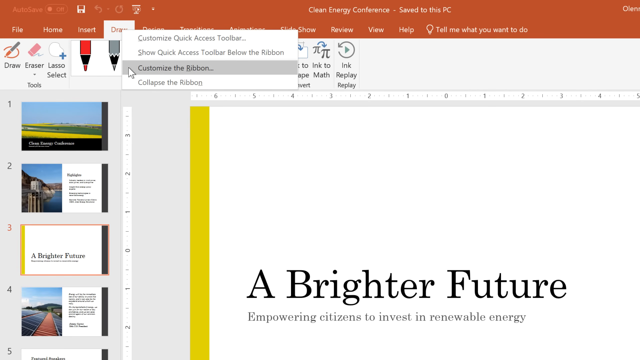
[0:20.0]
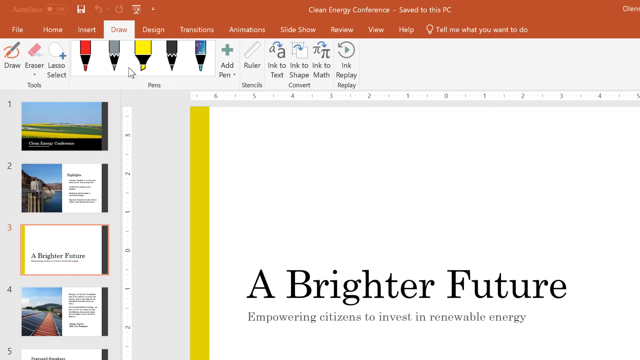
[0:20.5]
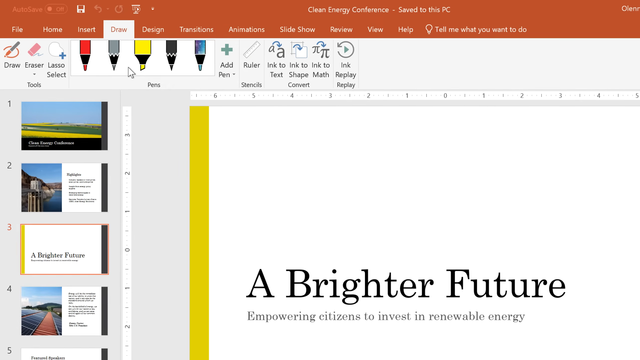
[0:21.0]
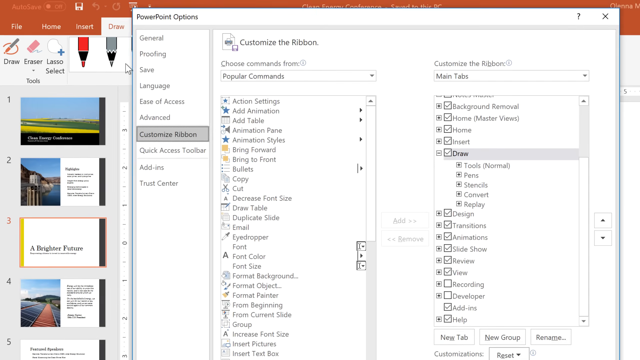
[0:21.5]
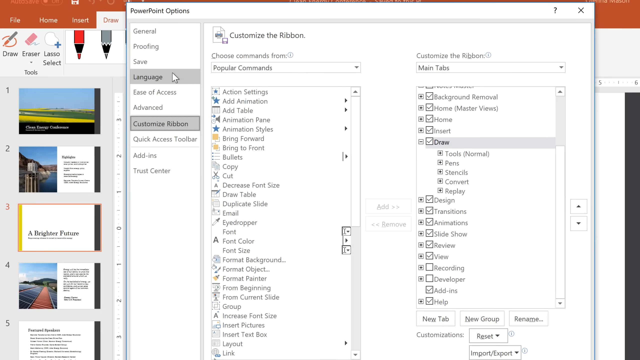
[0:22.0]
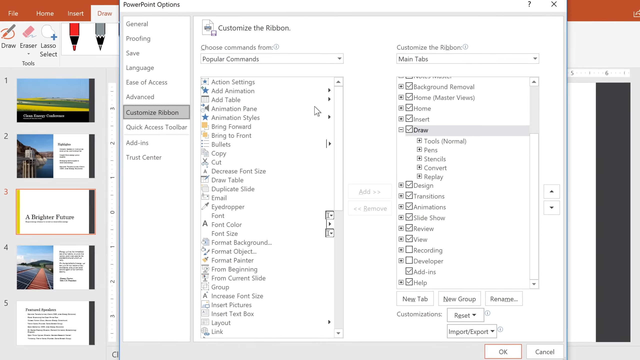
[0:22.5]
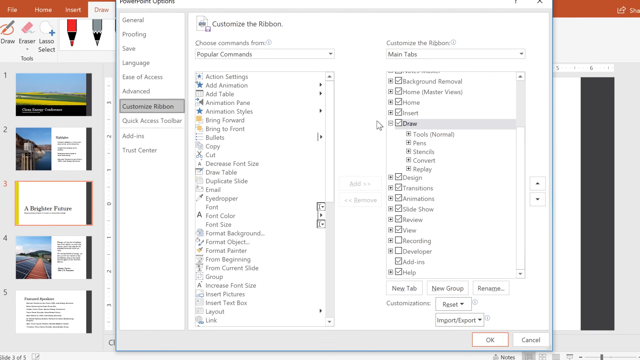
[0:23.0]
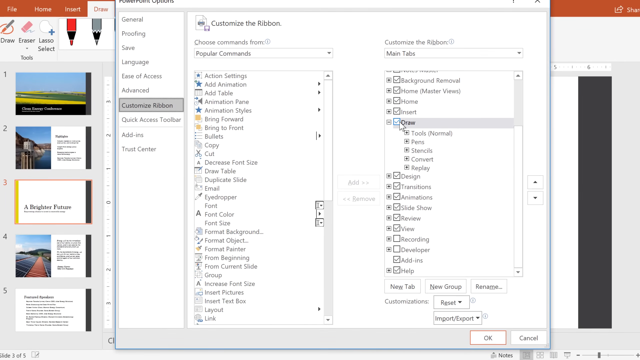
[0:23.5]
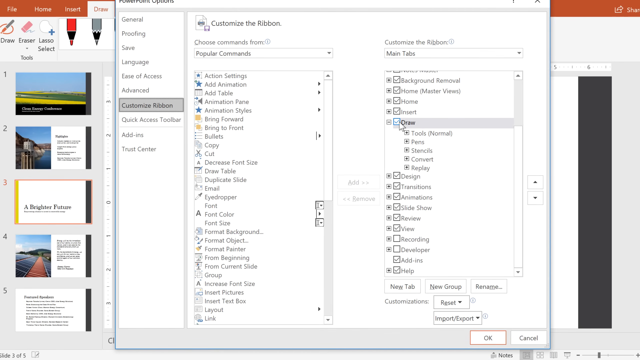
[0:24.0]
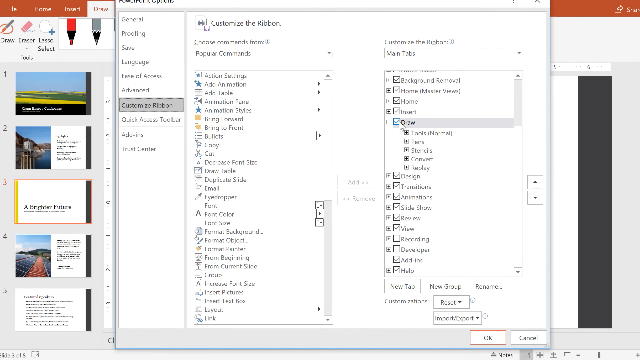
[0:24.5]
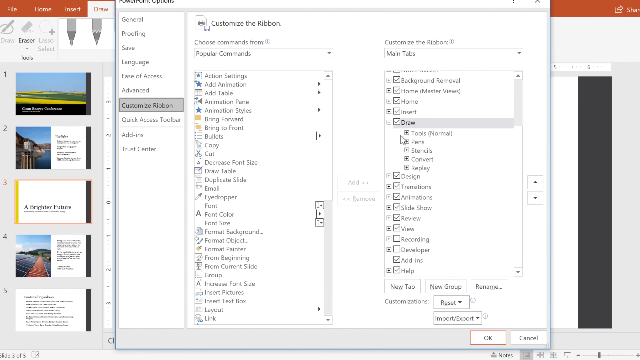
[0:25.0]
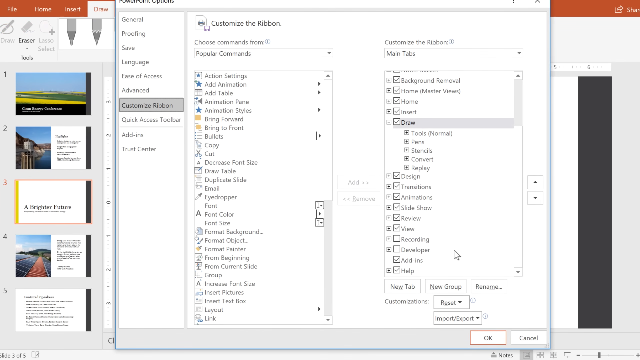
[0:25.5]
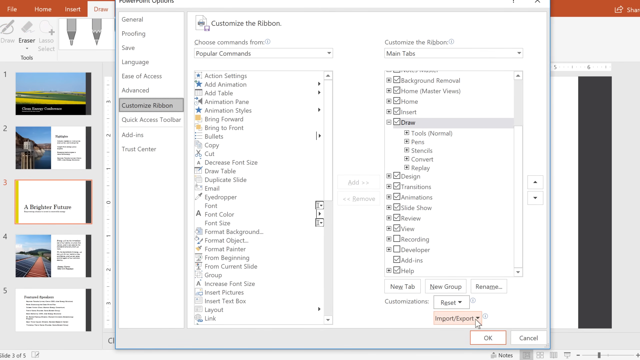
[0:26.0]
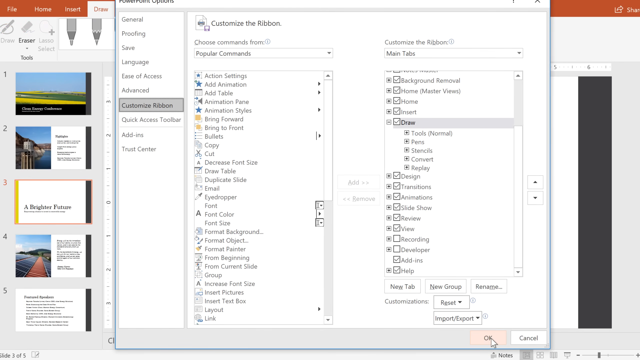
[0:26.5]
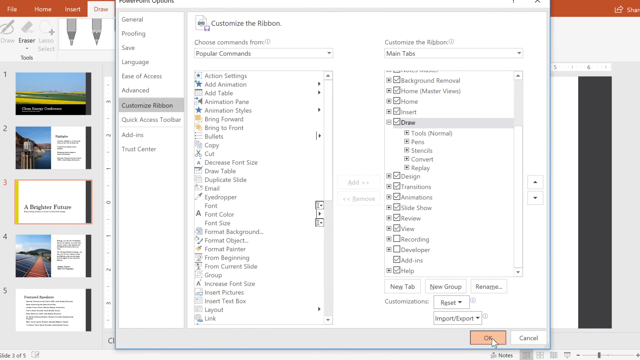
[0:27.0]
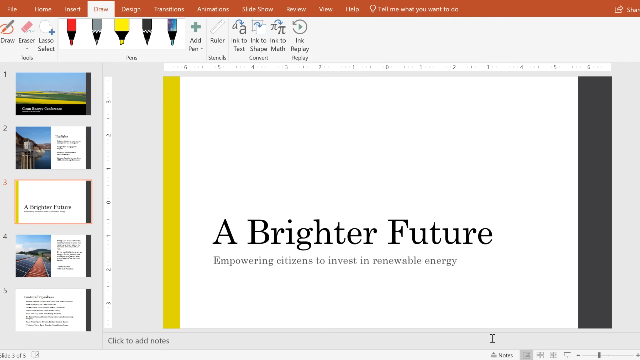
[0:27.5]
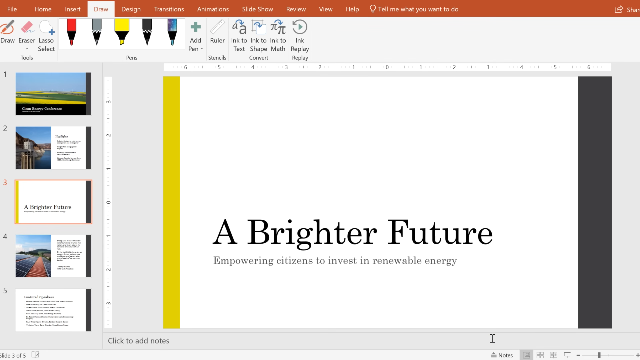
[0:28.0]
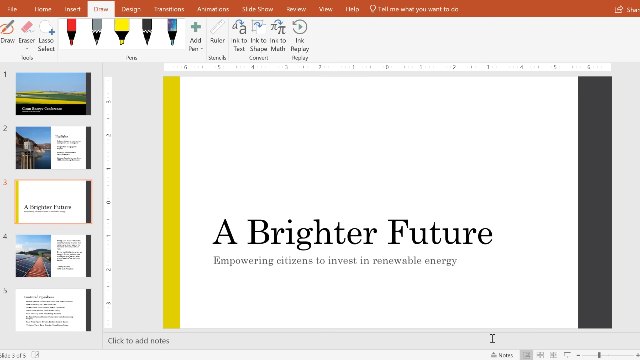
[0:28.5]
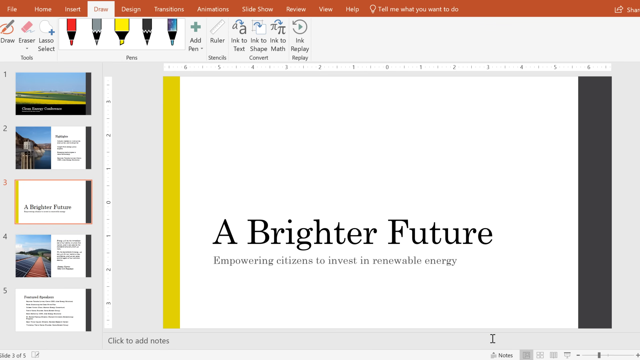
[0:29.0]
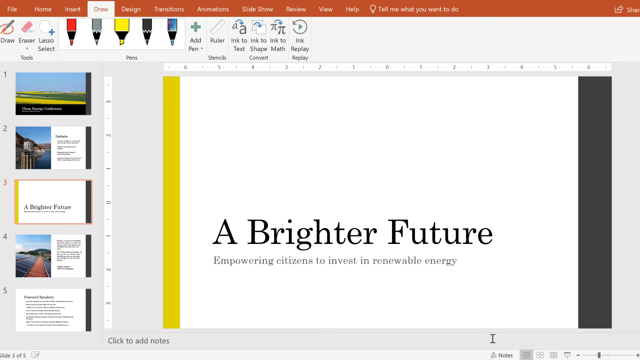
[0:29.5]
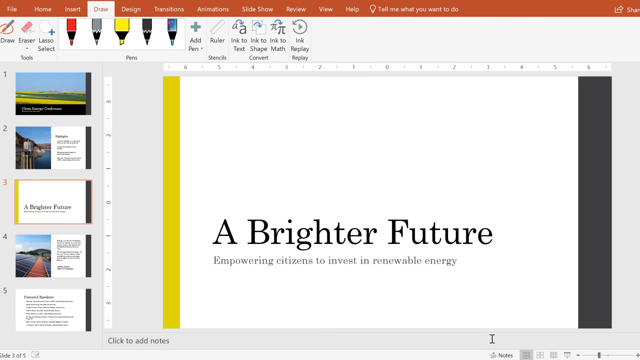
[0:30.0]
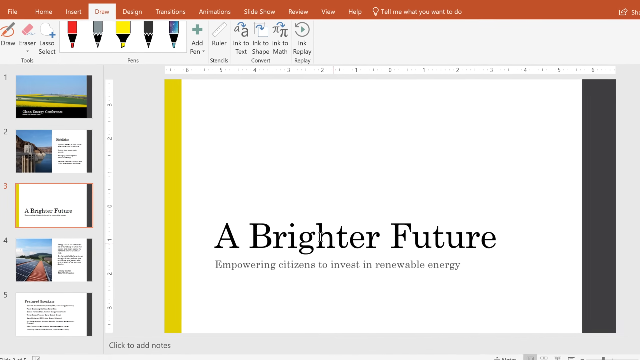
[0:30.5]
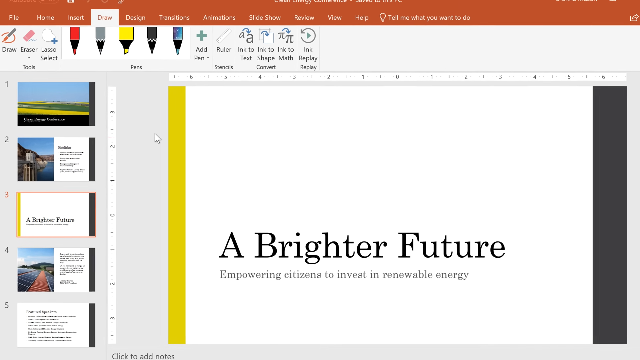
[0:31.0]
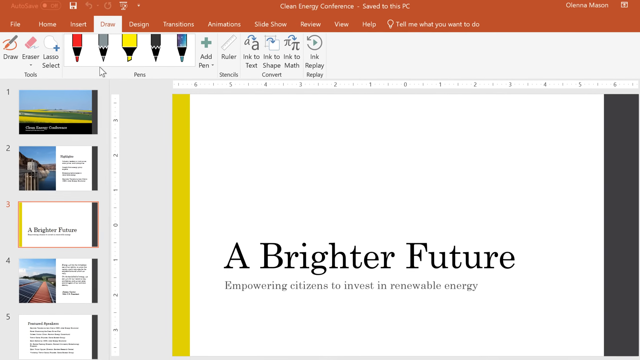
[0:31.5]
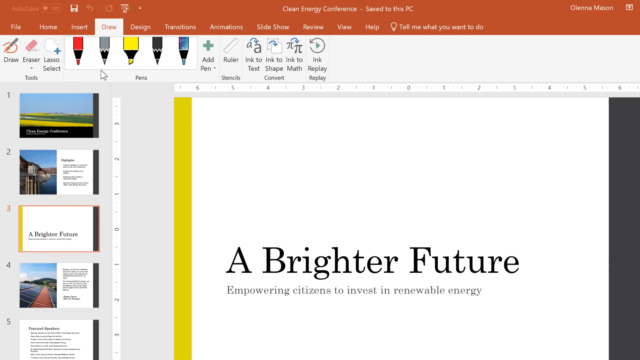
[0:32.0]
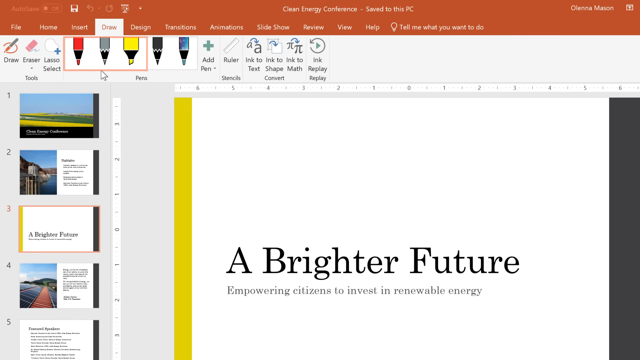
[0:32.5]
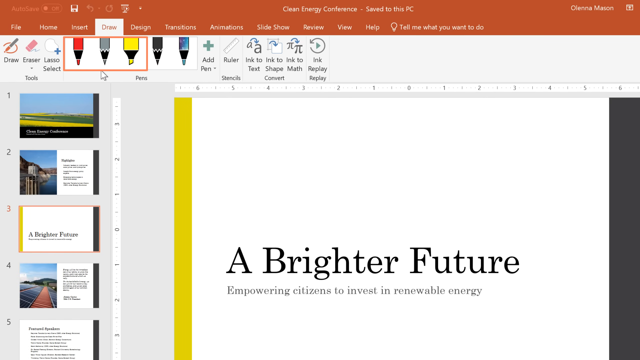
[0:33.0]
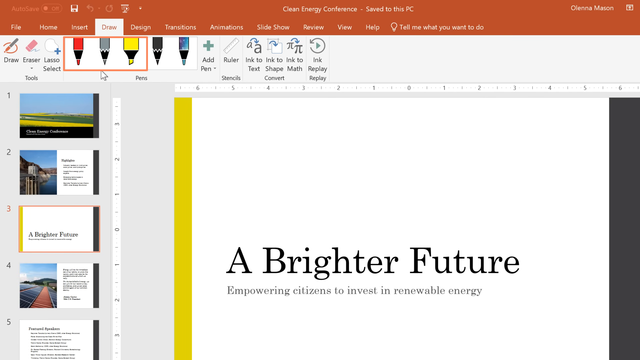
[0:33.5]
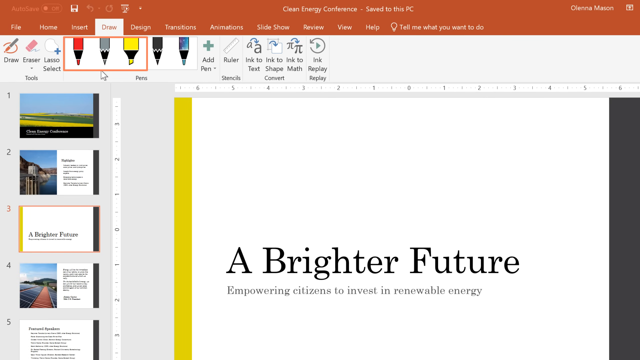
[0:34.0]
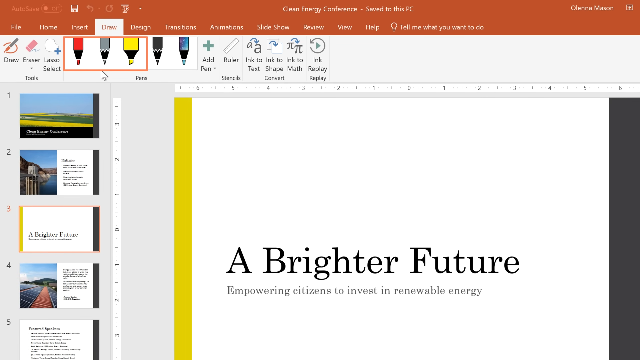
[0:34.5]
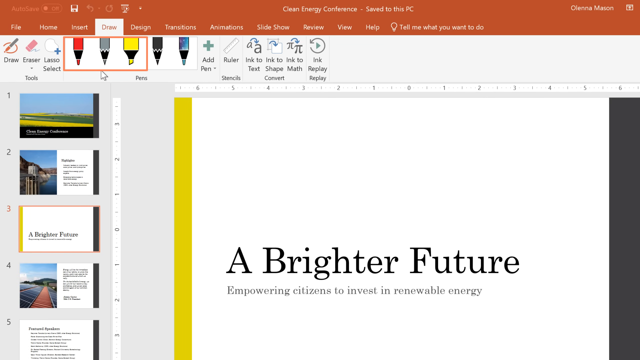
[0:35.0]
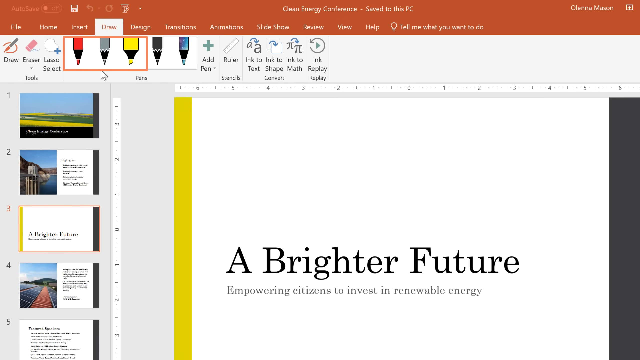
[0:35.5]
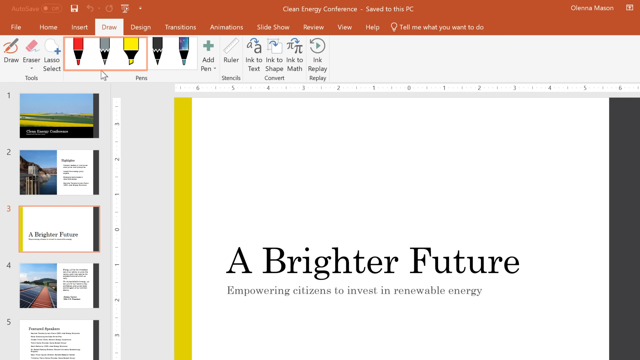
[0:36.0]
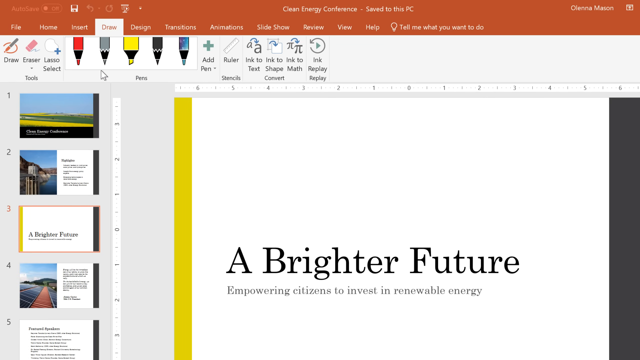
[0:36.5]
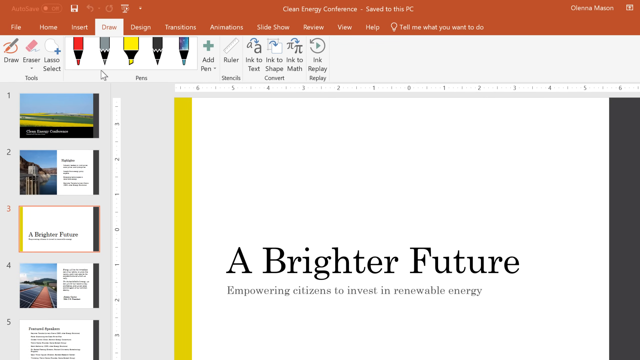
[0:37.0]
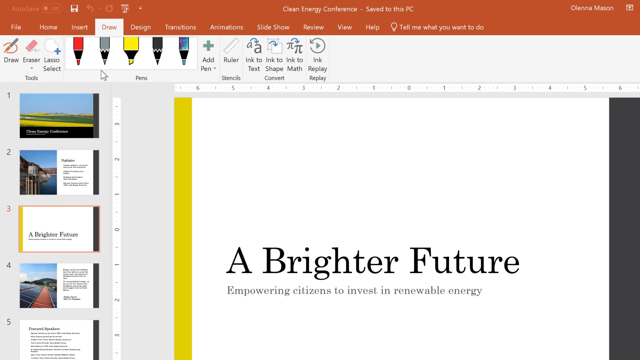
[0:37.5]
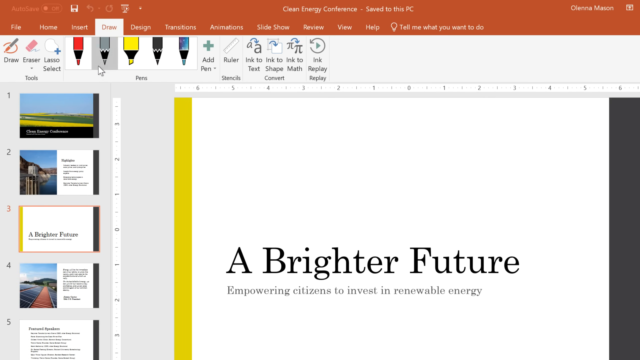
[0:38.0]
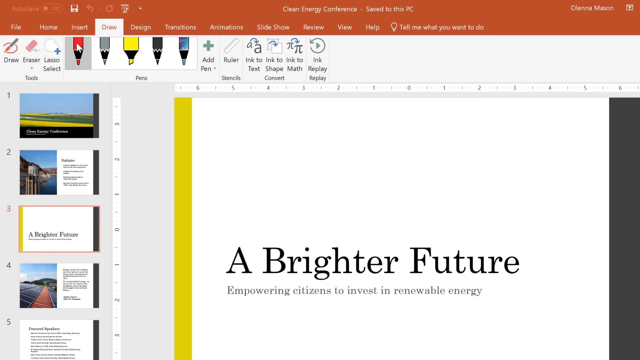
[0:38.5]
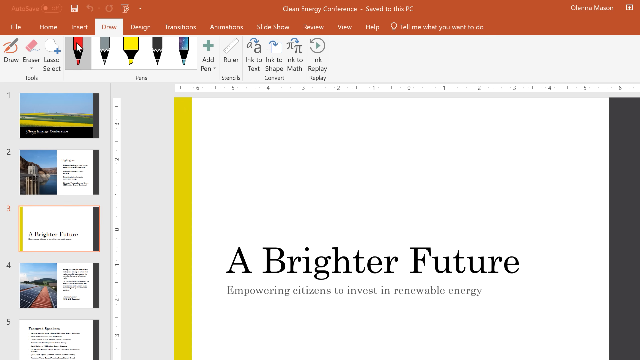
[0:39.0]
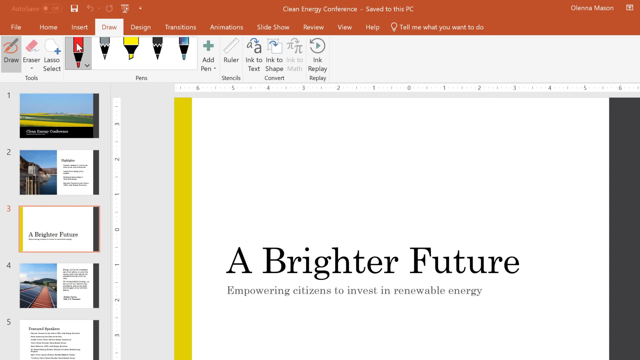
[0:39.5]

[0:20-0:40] The PowerPoint presentation is still on screen with the Draw tab selected and some submenus selected. A PowerPoint Options window opens, and the mouse pointer moves over several areas as some of the options are selected. The view then returns to an area at the top of the menu where there are the tops of markers pointed down, in red, gray and yellow. An orange box is drawn around this area, and the mouse pointer is over that area as well. The red one appears to be selected. The word "customized" is visible, and the ribbon is kind of highlighted in gray. On the left-hand side there is almost a sidebar showing the numbers 1, 2, 3 and 4, with the pages of the PowerPoint presentation created so far to the right of each number.